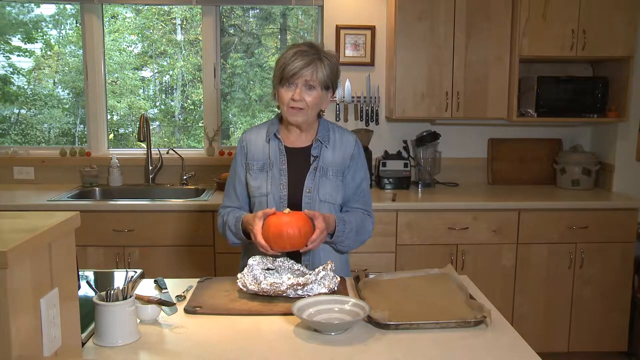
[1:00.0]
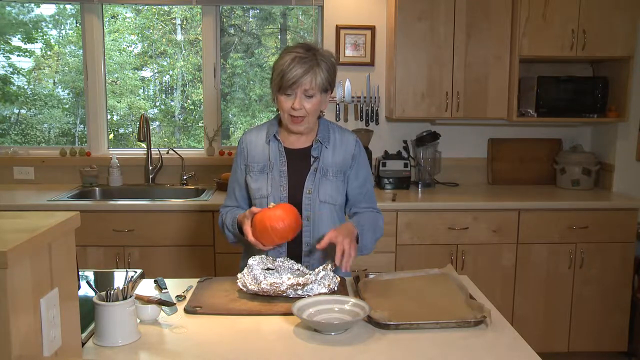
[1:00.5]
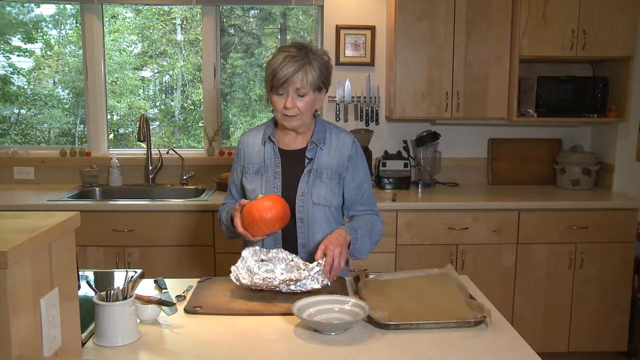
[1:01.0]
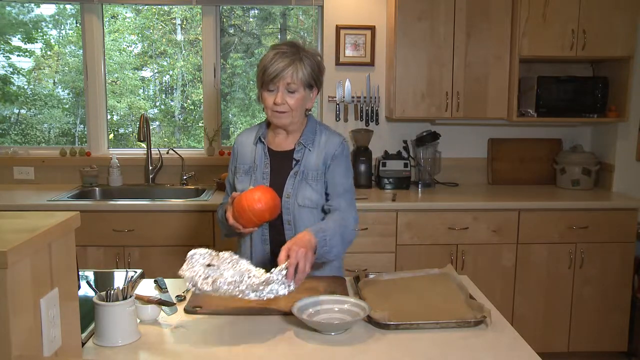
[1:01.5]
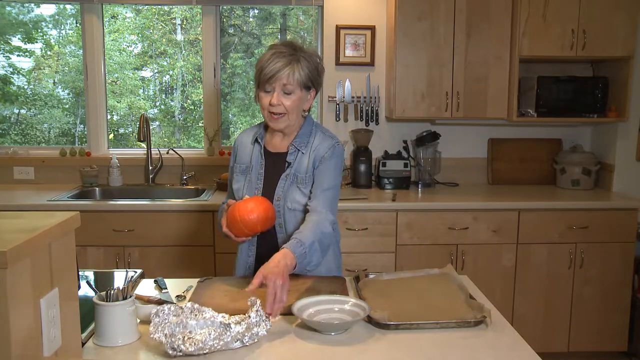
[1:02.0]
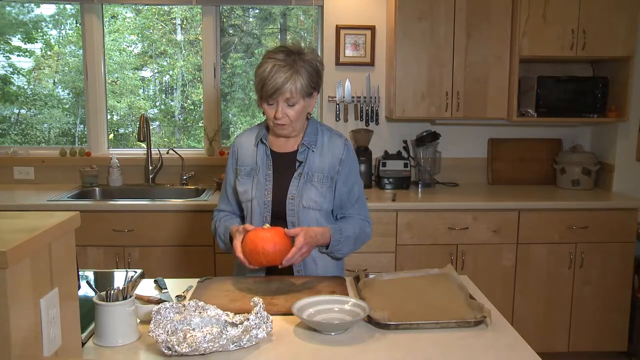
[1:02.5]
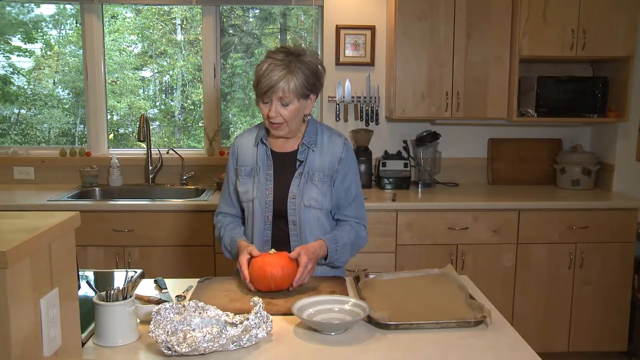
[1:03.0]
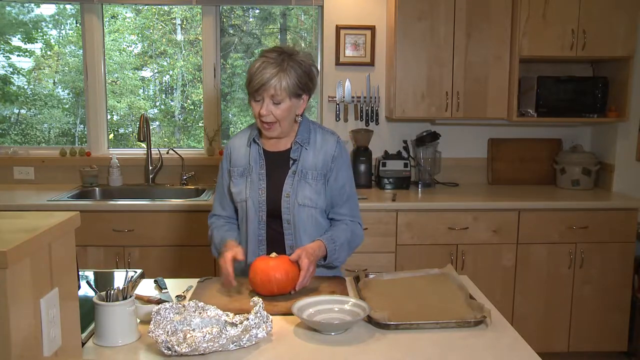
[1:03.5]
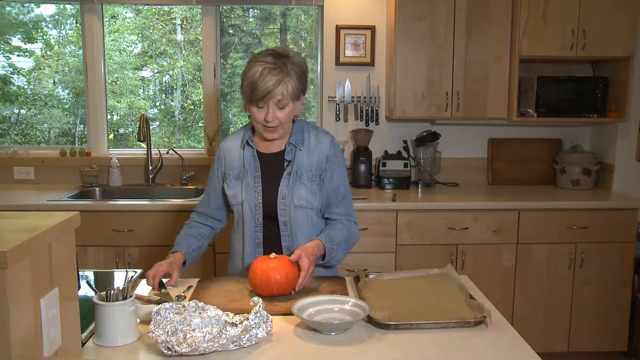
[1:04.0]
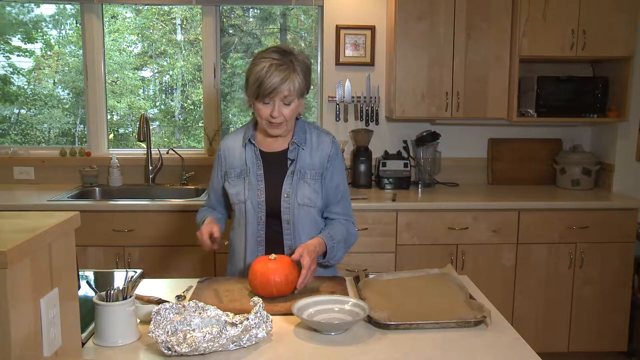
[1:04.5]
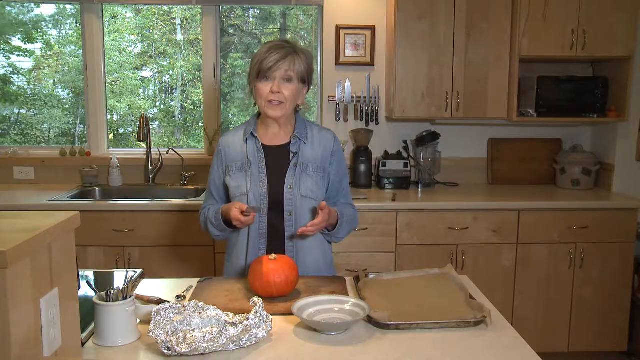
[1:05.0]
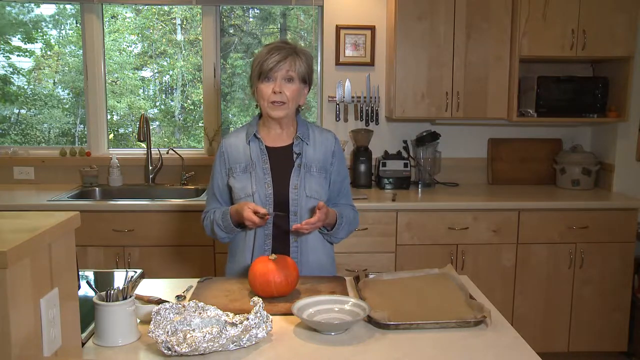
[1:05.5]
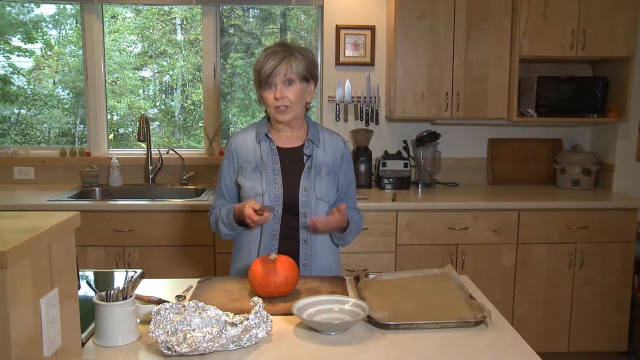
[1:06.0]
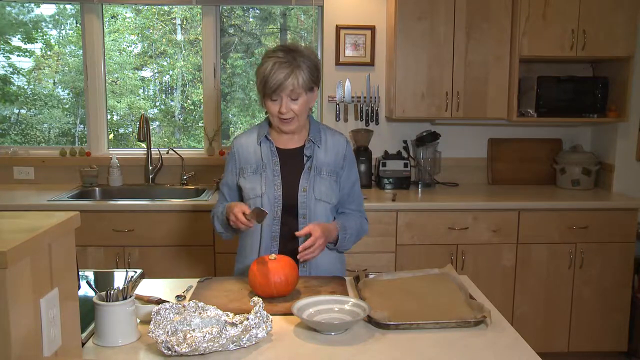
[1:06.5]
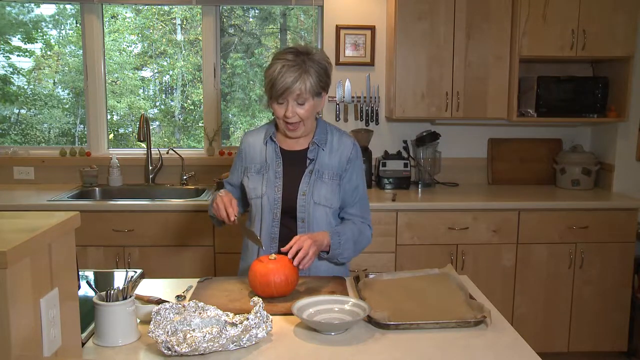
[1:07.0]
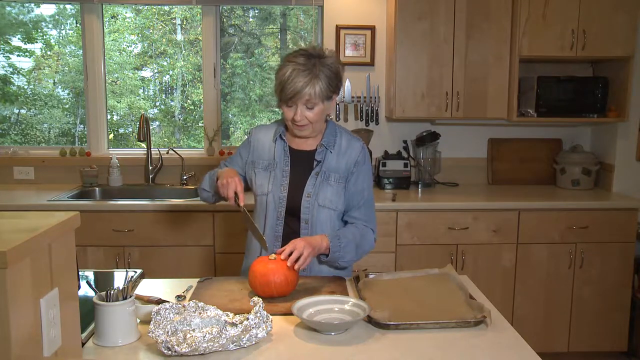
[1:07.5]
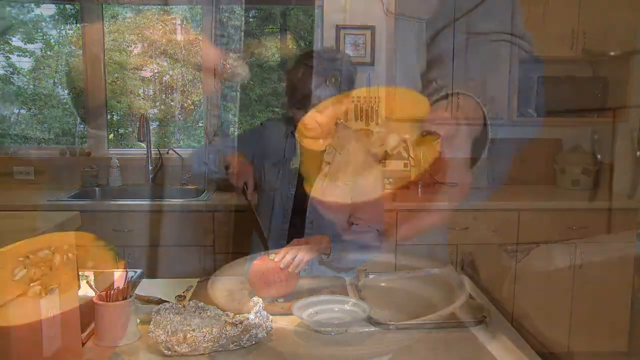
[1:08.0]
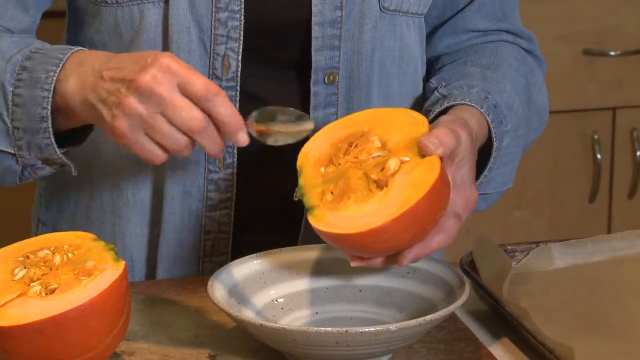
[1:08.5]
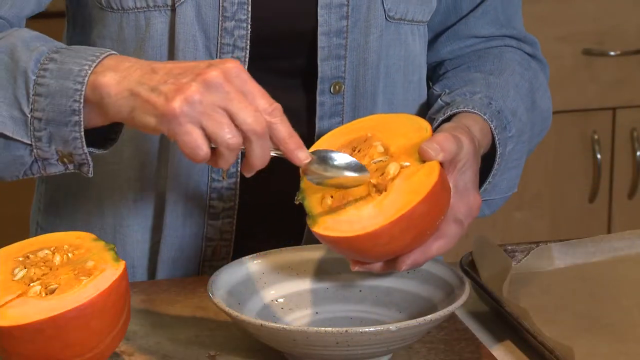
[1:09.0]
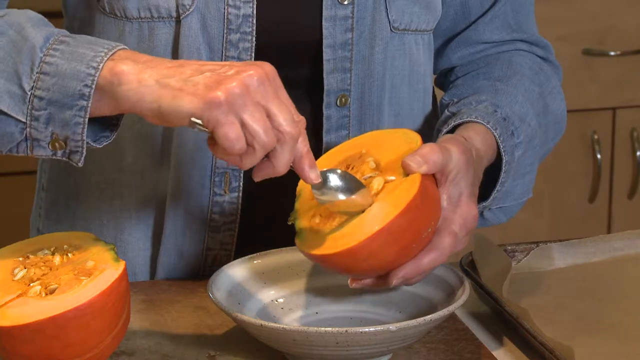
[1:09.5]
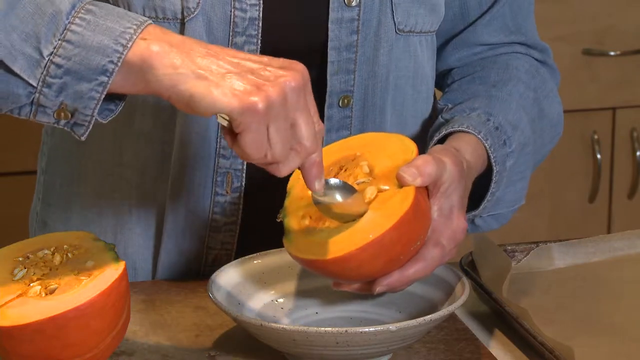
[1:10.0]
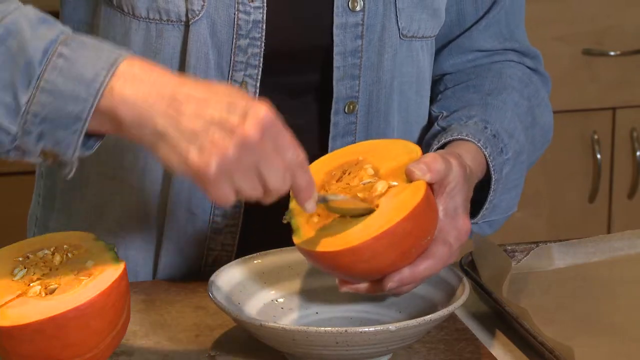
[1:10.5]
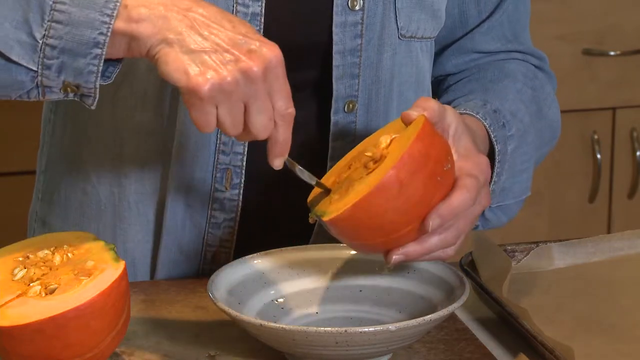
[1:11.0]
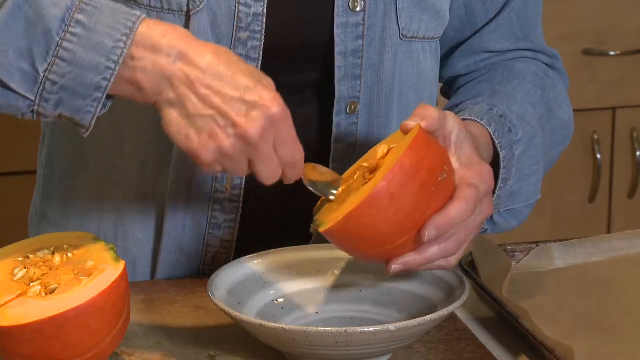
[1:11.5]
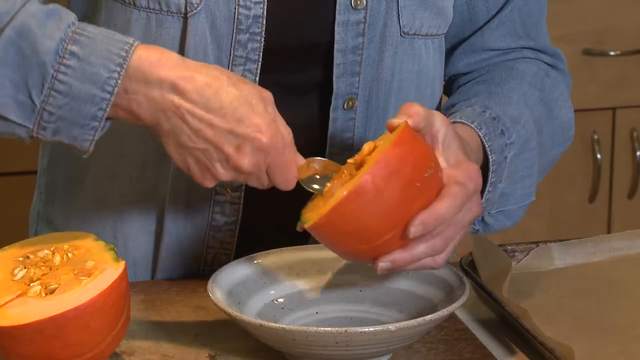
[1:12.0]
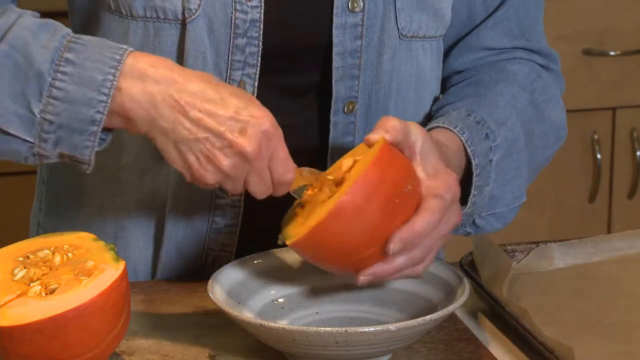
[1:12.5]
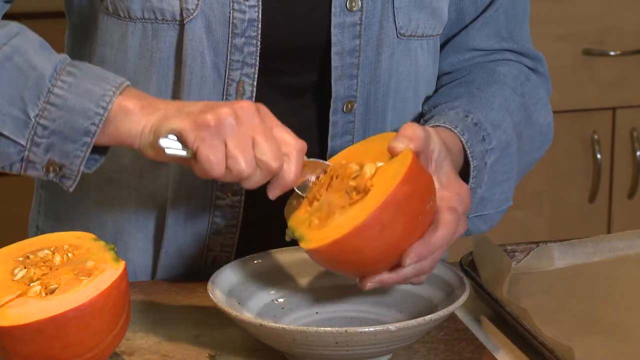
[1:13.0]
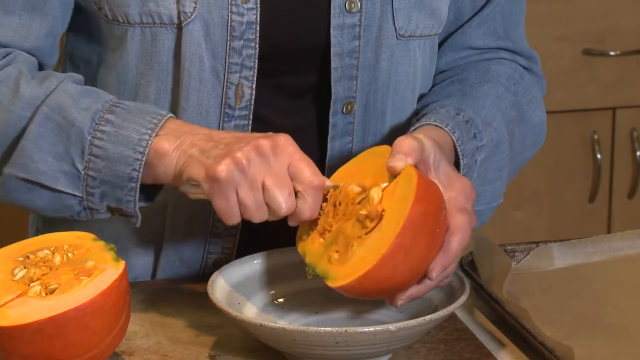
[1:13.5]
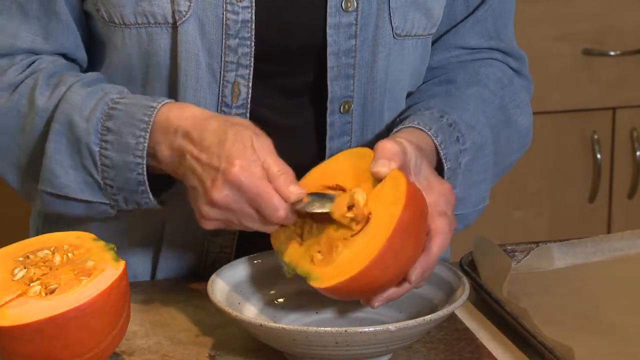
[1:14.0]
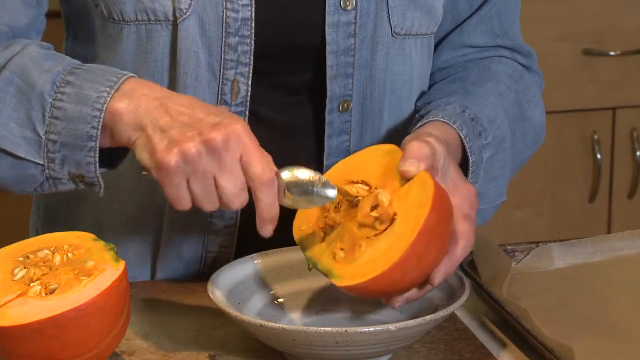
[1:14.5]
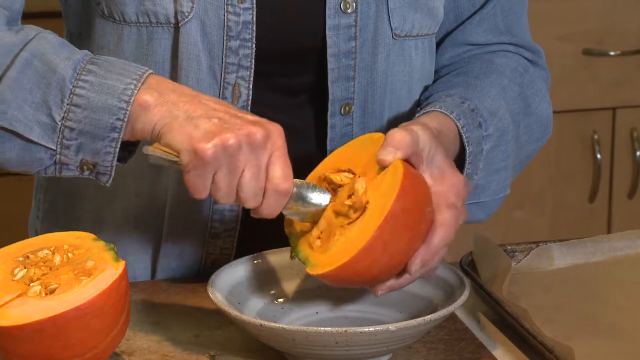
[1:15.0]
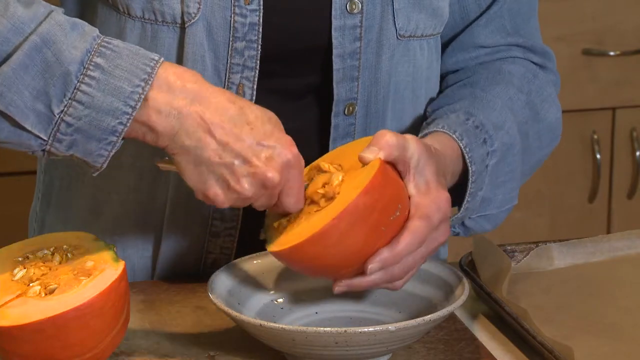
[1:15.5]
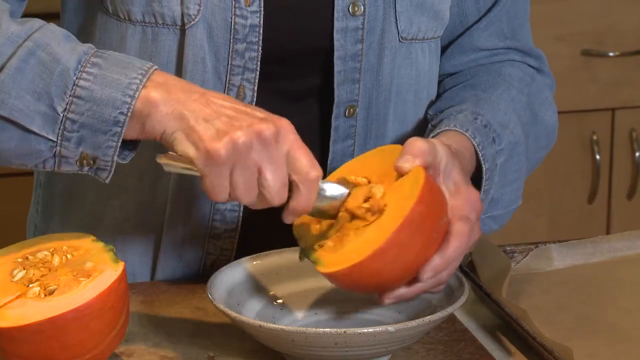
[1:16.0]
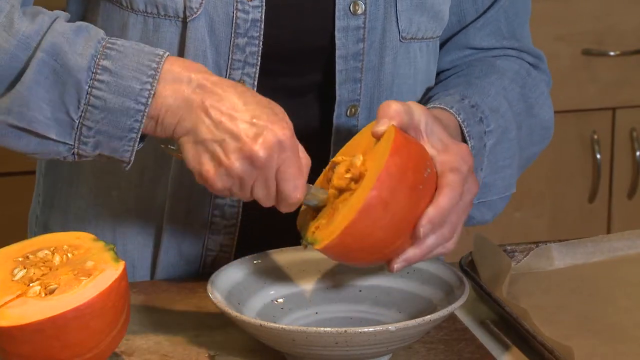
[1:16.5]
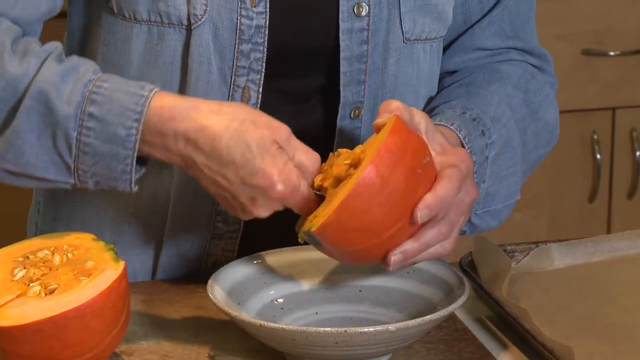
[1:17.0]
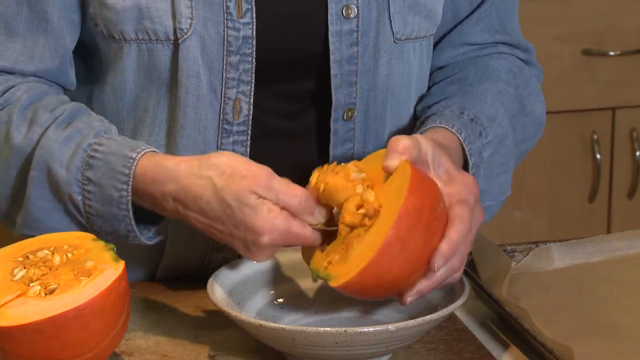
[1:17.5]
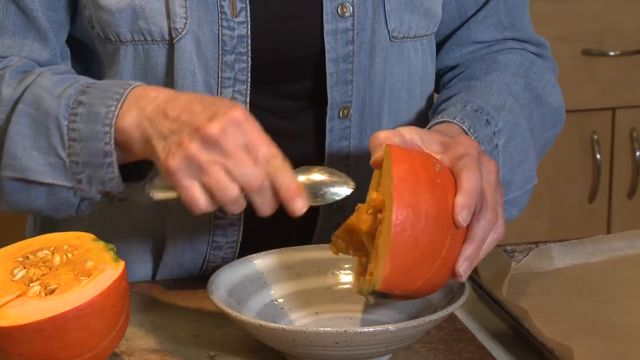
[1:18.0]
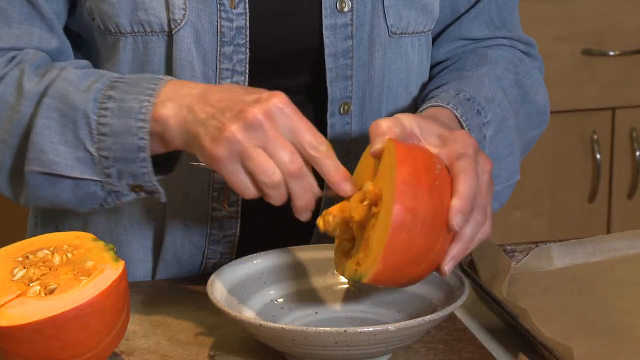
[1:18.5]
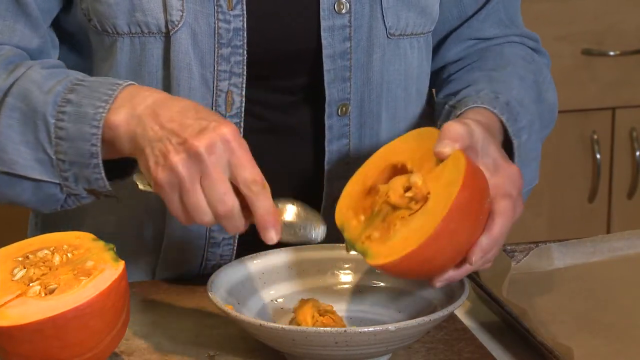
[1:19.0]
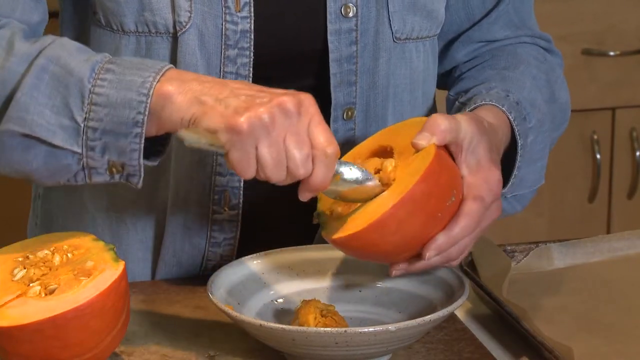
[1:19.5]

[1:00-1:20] The pumpkin is on the cutting board, which is brown and medium-sized rather than large. A small spoon is to her right, and a pastry brush is also present. She now has her knife and acts as if she is about to cut, sticking the tip of the blade near the top where the vine would extend from the pumpkin. The camera quickly pans over to show the pumpkin cut all the way through in half, with seeds inside. She holds the spoon that was by the cutting board in her right hand and one half of the pumpkin in her left, with the bowl underneath. She runs the spoon around the edges where the seeds are to get them into the bowl, holding the half firmly with her left hand as she clears out the seeds.